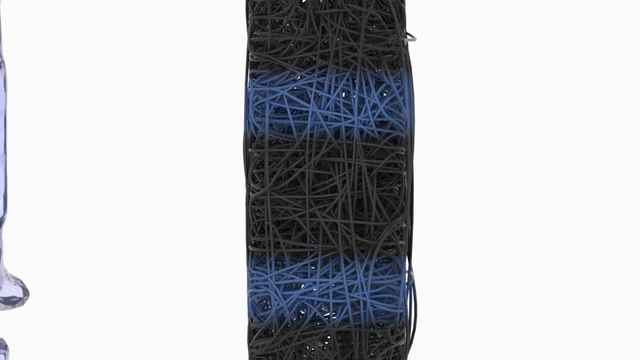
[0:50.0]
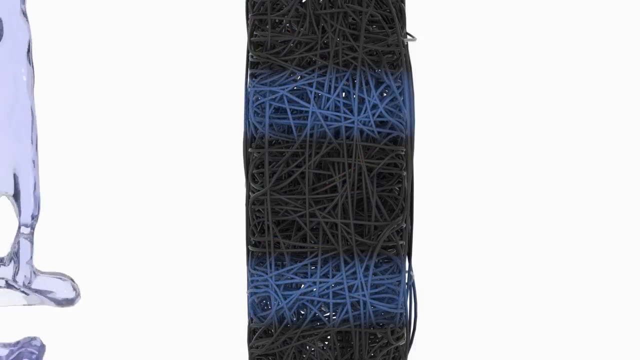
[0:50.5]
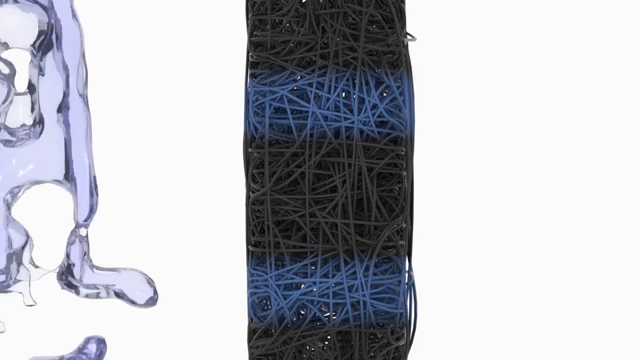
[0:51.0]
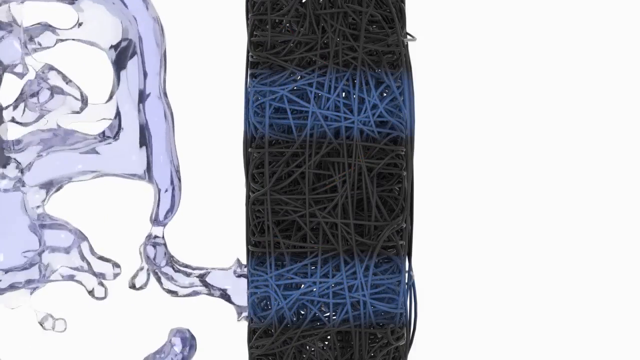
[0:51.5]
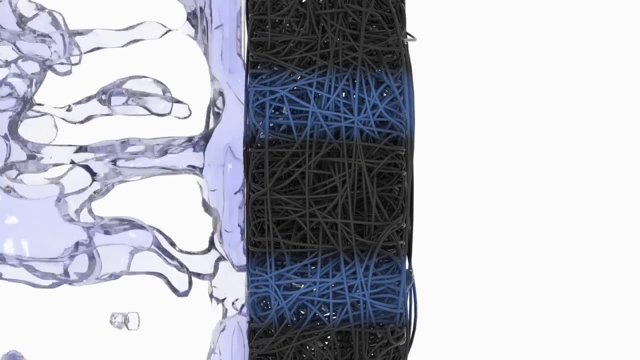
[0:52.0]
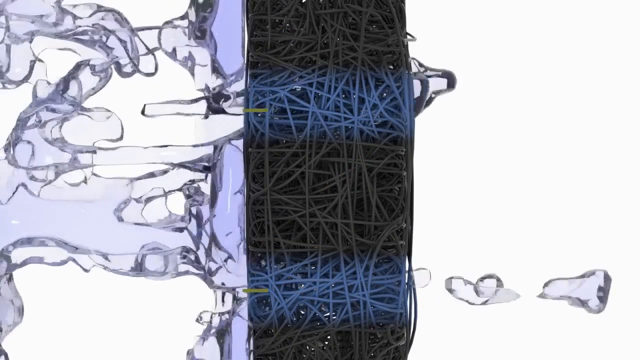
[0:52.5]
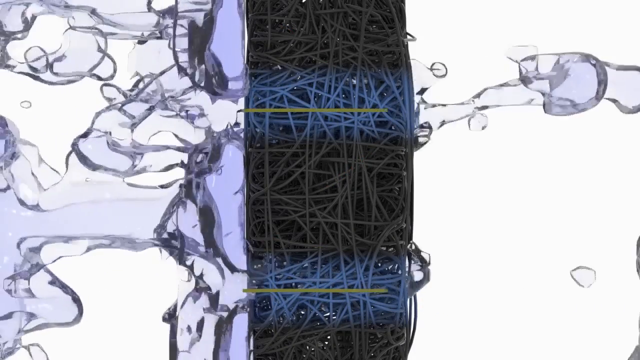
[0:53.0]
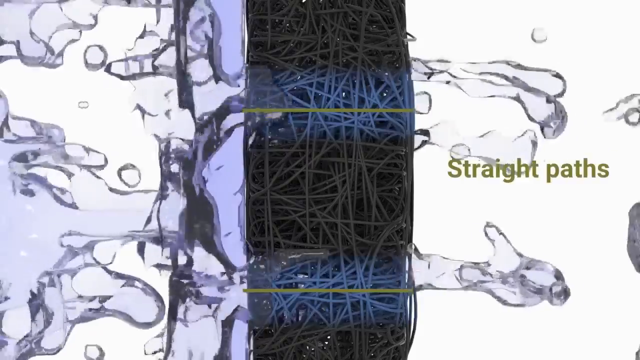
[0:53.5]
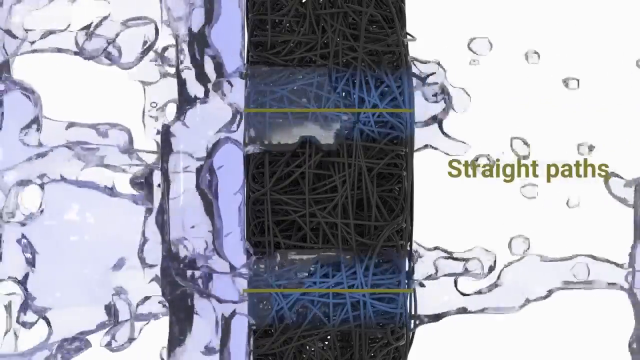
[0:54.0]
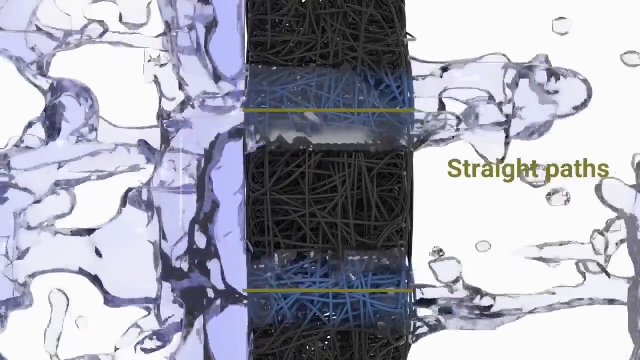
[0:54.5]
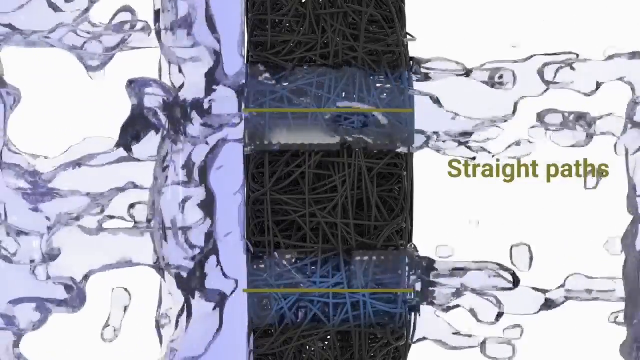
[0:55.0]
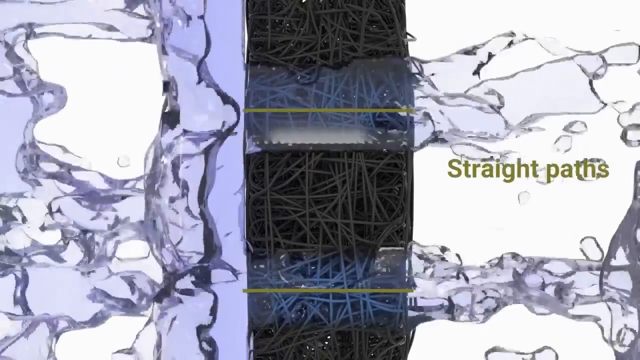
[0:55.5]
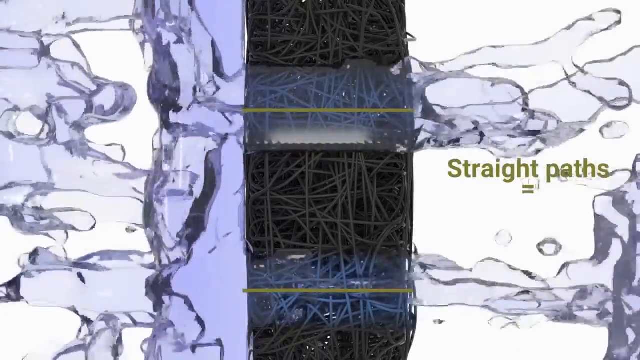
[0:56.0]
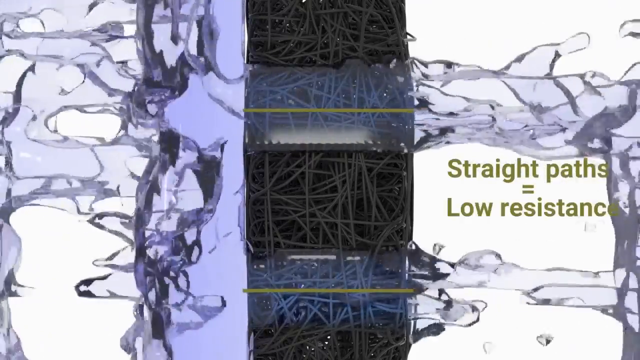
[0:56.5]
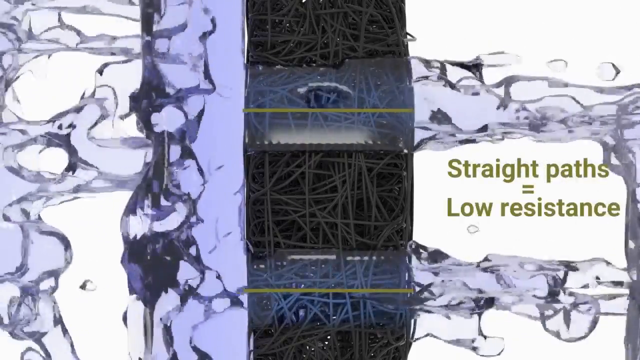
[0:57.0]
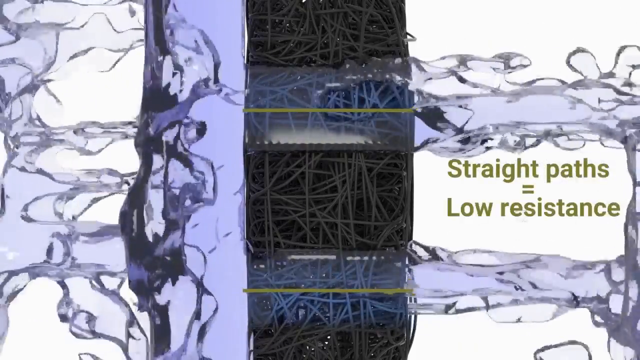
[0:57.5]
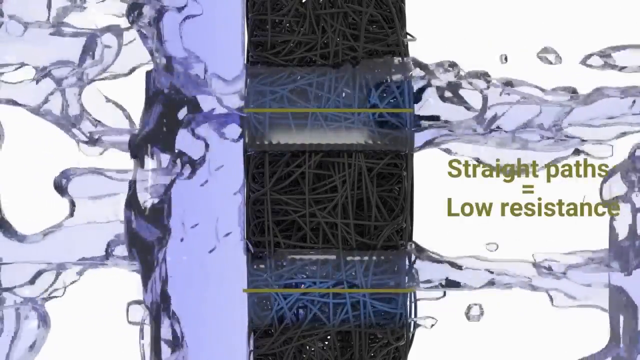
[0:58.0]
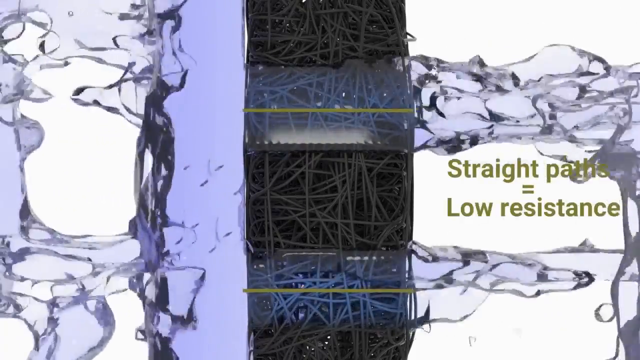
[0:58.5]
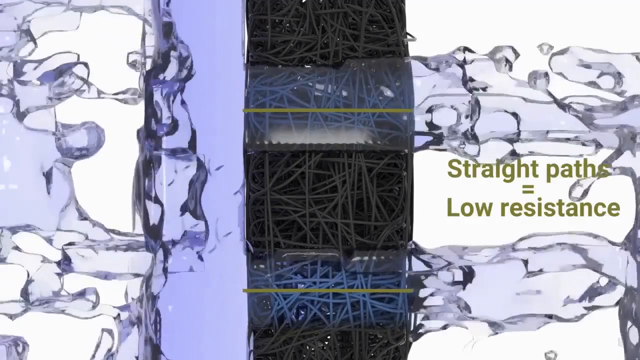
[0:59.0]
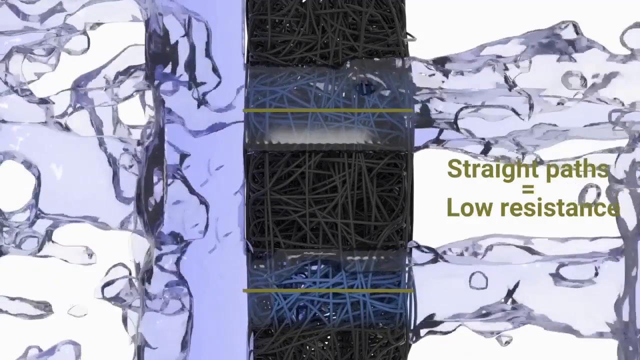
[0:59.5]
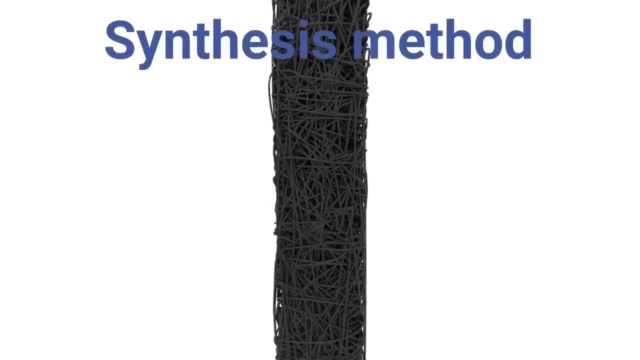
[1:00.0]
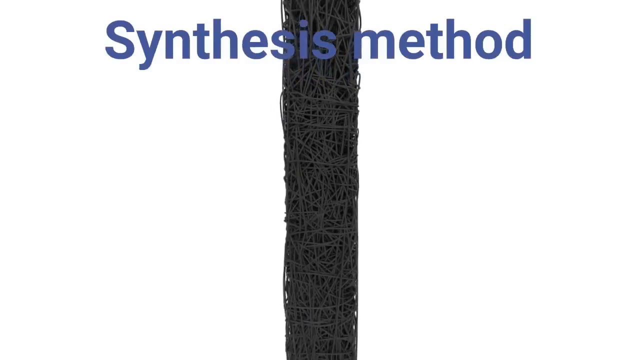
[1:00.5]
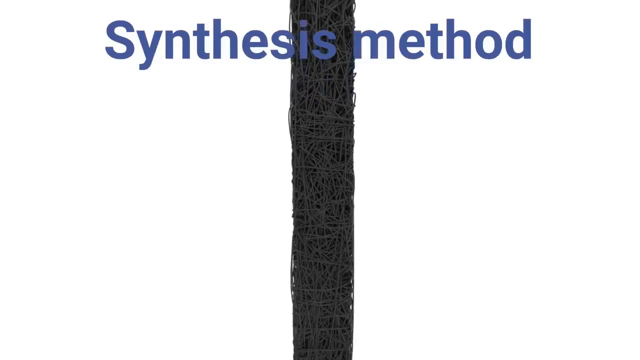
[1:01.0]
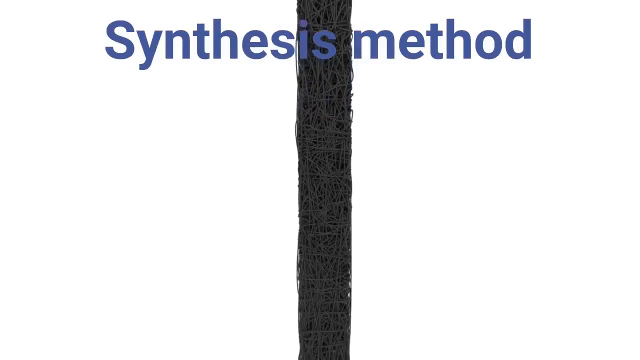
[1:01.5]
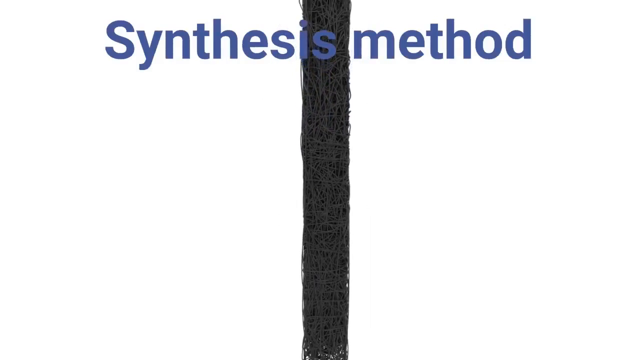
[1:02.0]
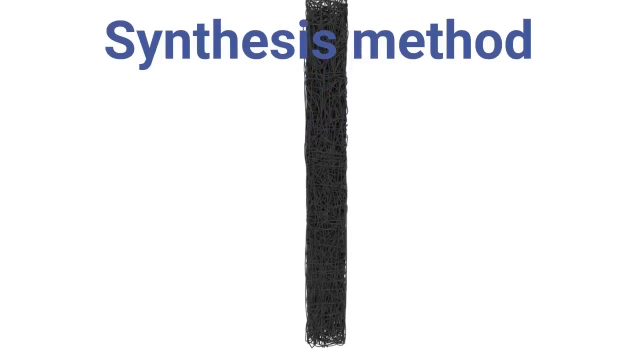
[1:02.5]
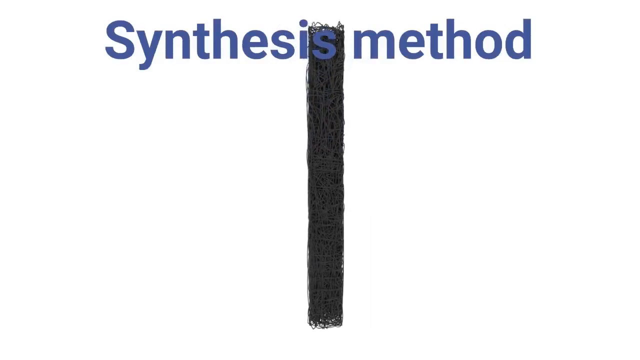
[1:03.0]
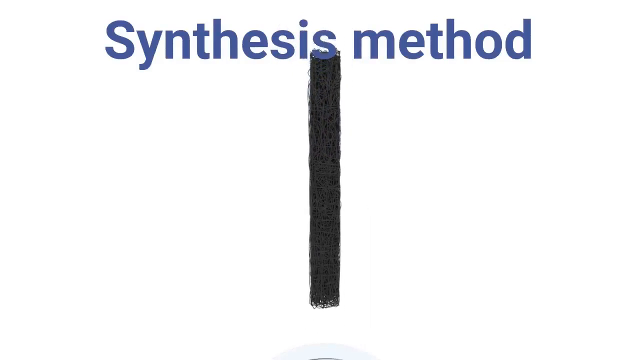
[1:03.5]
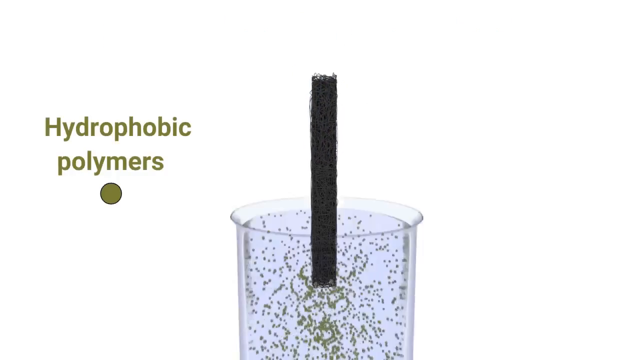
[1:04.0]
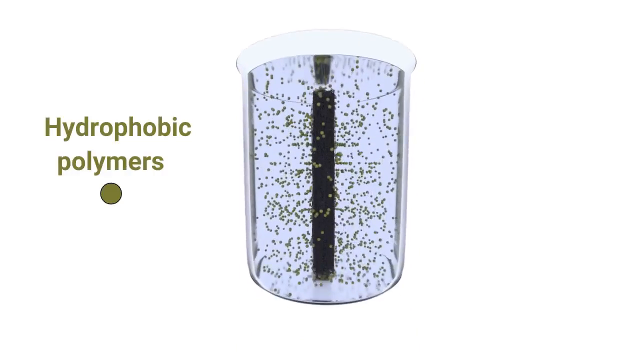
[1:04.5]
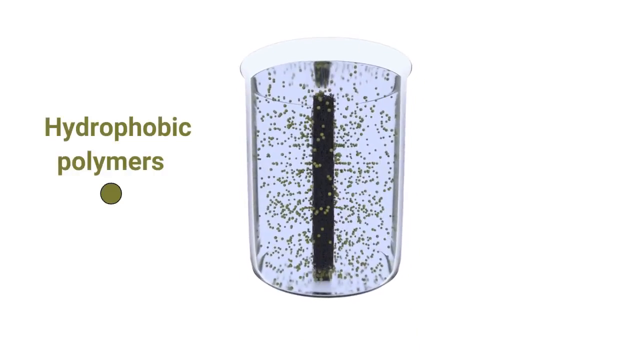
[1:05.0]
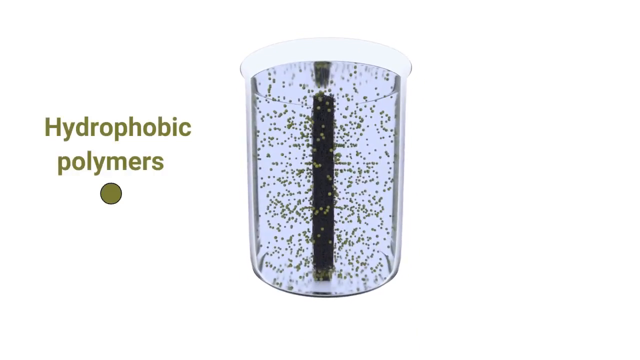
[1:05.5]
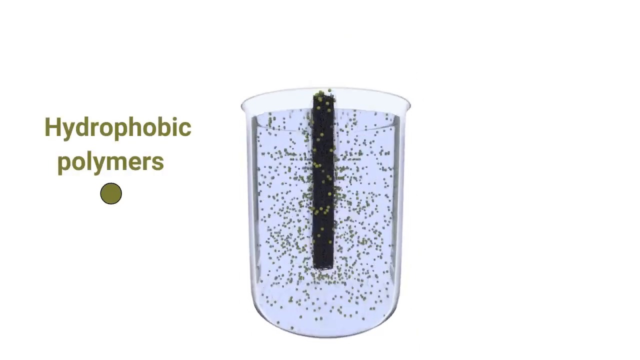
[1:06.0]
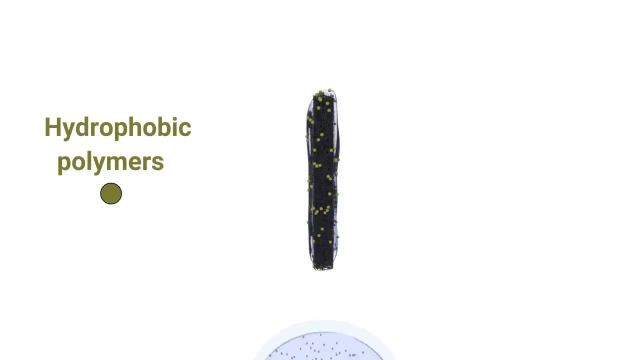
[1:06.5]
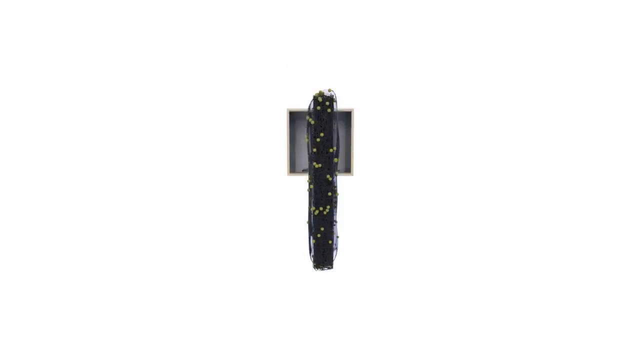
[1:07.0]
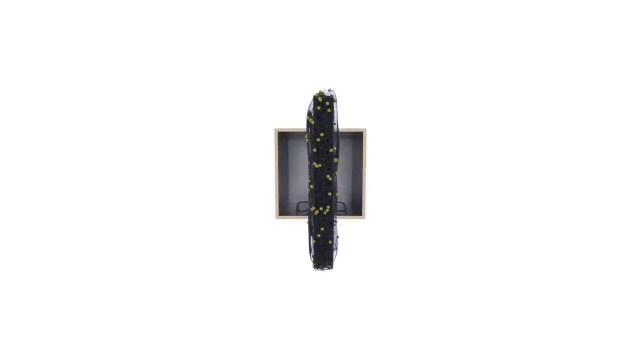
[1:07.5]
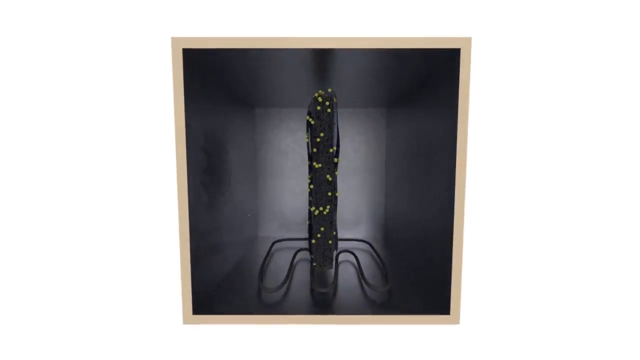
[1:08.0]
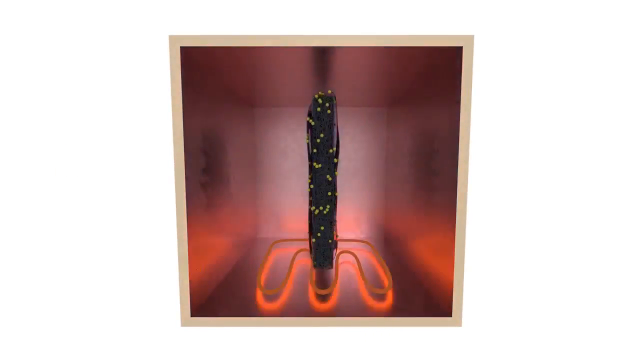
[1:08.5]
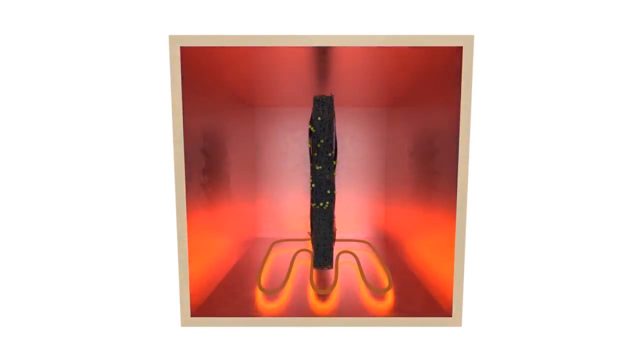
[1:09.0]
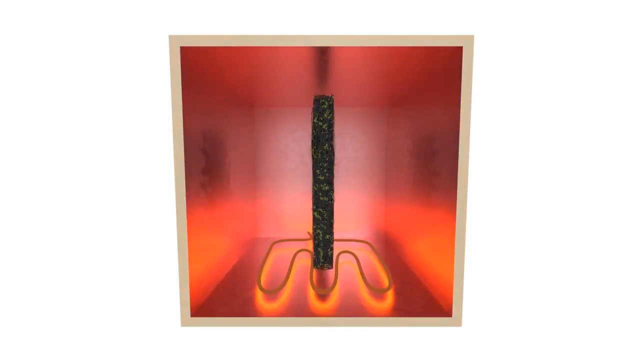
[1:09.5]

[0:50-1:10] The gray, ropey, spaghetti-like fiber structure appears, now highlighted blue-white in two horizontal stripes, one toward the upper part and one across the bottom of the screen, each about a fifth of the screen's height. Water falls on it from the left toward the right and goes right through, following the highlighted paths, while green lines move through those paths to show the water traveling in a straight path. Green text on the right indicates straight paths, and the water flows through and falls off the right side. After a second, text reads "straight paths equal low resistance." The scene changes to the gray fiber structure in the middle, and the camera pulls backward away from the material as a blue title across the top reads "Synthesis Method." As it continues to pull away, the material is revealed as a tall vertical column. A gigantic beaker of water engulfs it, so the structure is inside the clear beaker of water with many bubbles or other blue dots in it. On the left, a green caption reads "hydrophobic polymers," with a large dot underneath. The beaker falls away, leaving the structure surrounded by water and dots, maybe bubbles. A gray box drops very quickly from the bottom of the screen and moves around the structure; it is shiny on the inside, beige on the outside, and open toward the camera, with a heating element like an oven's, kind of a paw shape with three prongs, which lights up, indicating heat, heating up the whole thing.